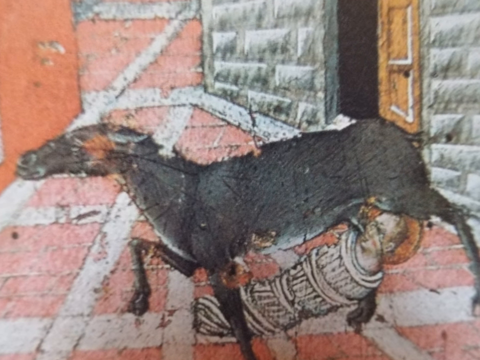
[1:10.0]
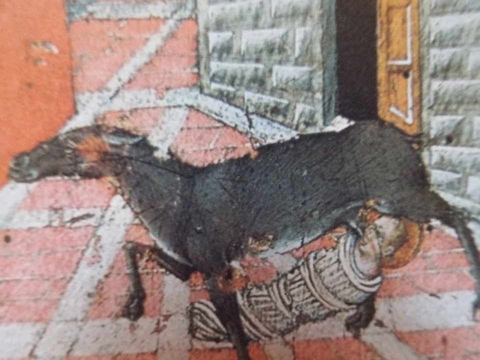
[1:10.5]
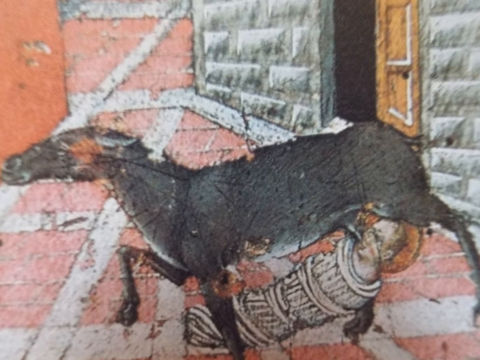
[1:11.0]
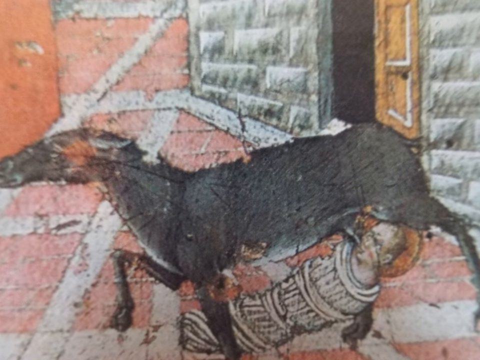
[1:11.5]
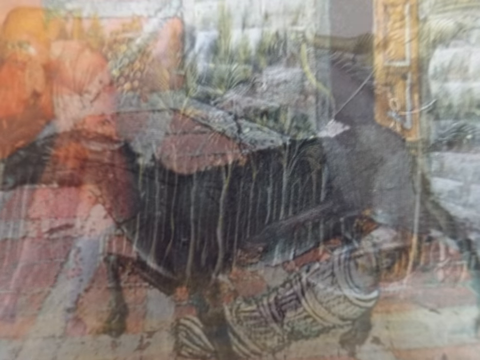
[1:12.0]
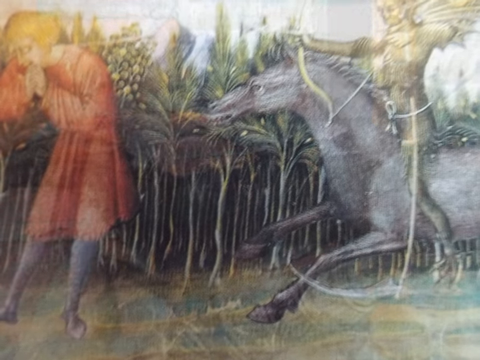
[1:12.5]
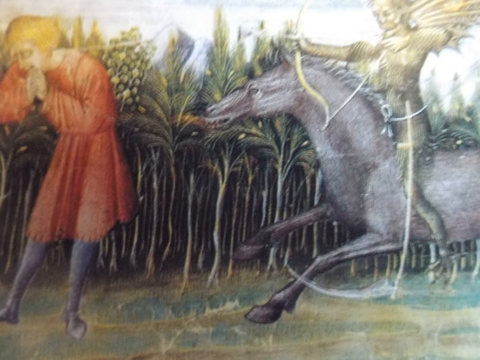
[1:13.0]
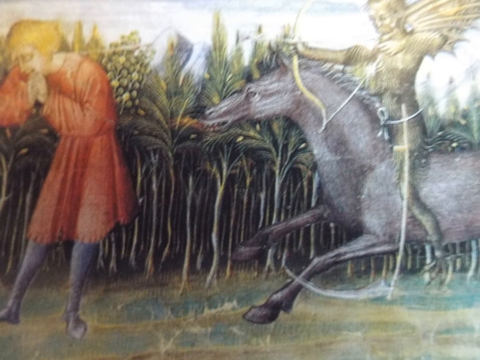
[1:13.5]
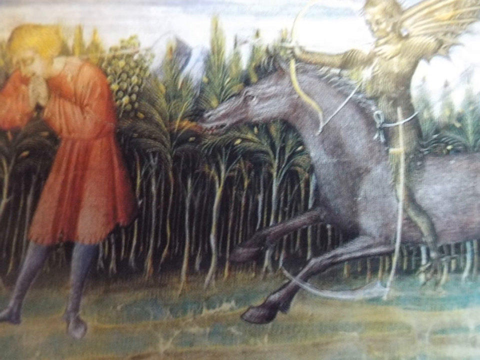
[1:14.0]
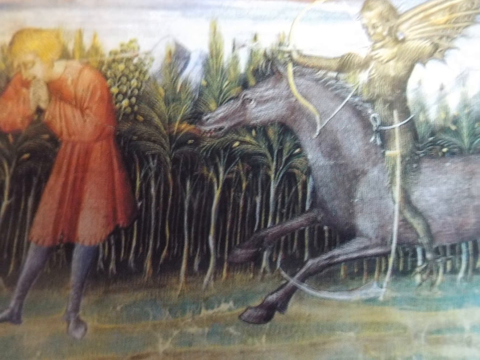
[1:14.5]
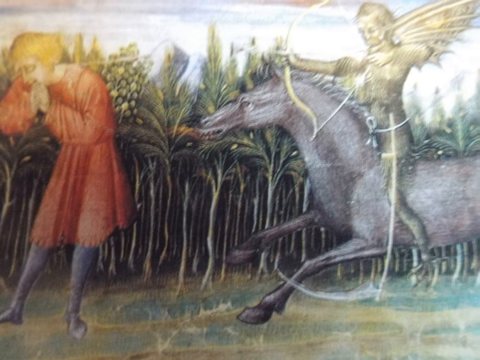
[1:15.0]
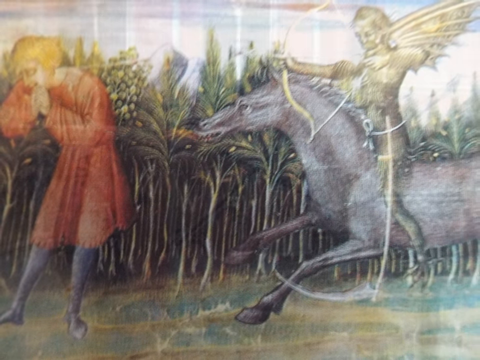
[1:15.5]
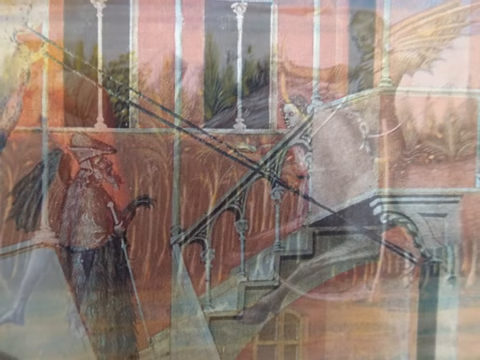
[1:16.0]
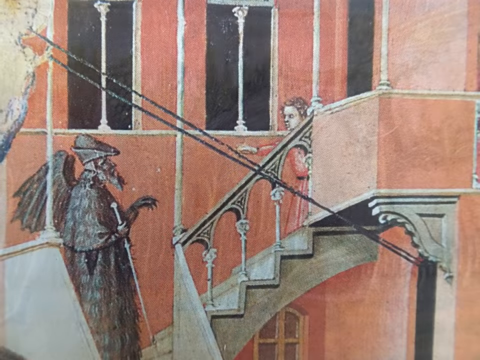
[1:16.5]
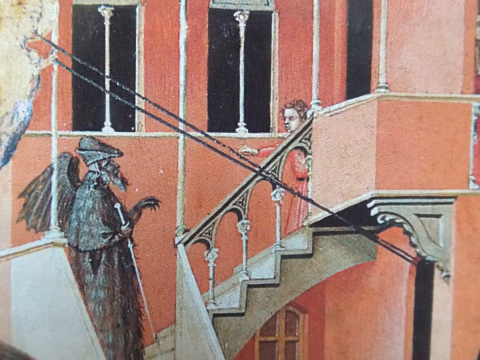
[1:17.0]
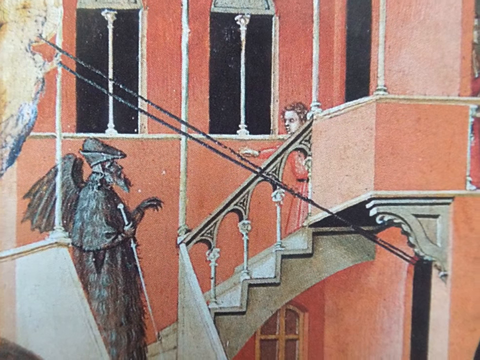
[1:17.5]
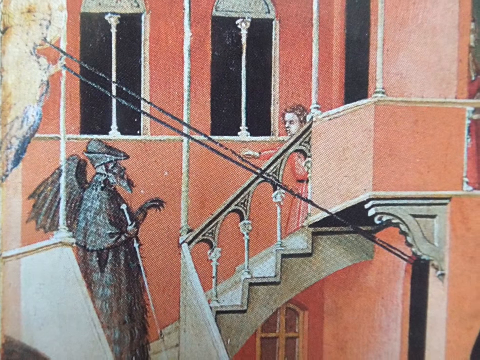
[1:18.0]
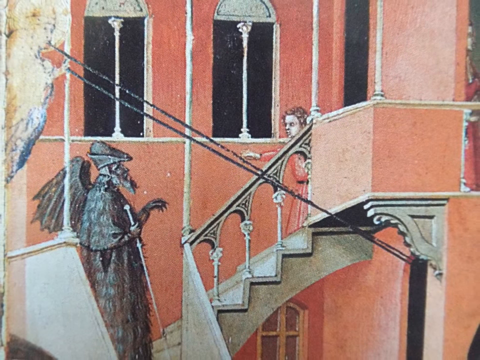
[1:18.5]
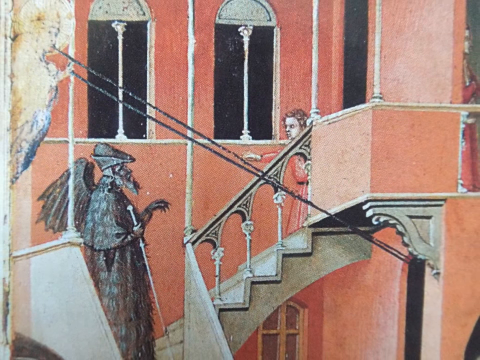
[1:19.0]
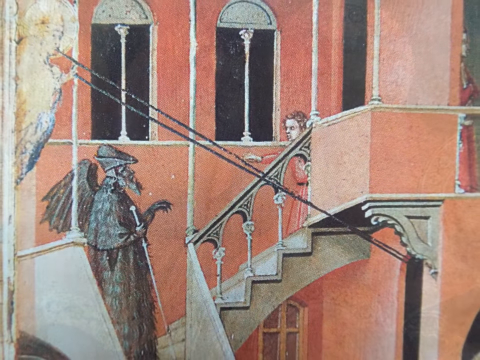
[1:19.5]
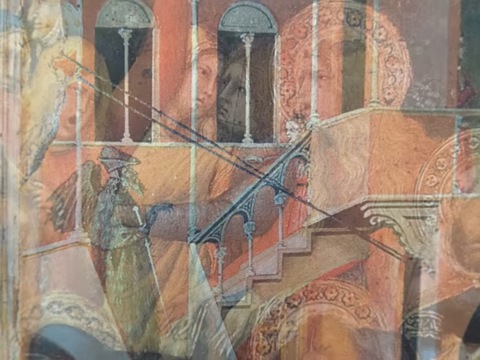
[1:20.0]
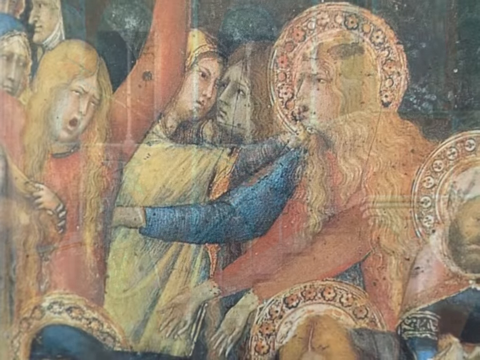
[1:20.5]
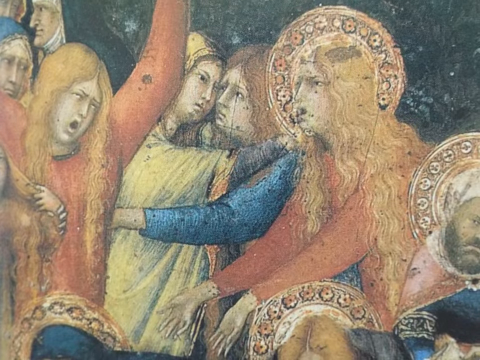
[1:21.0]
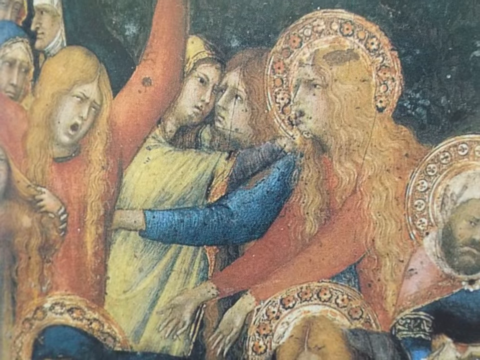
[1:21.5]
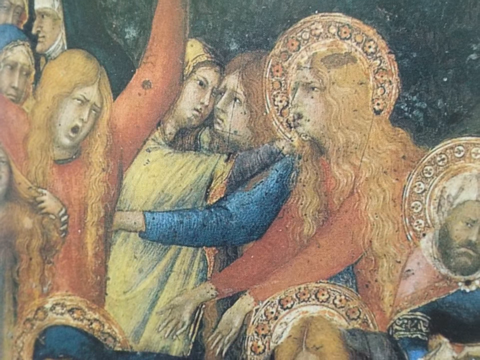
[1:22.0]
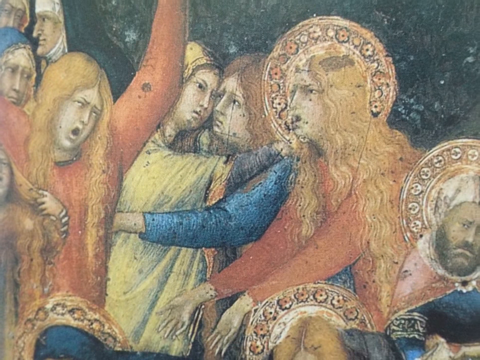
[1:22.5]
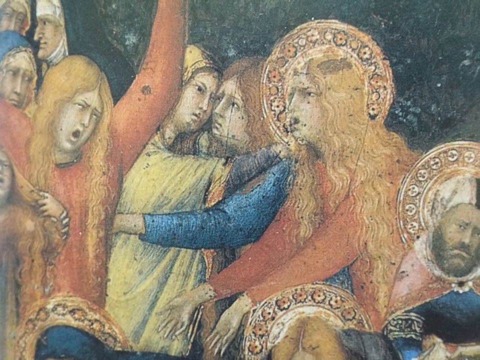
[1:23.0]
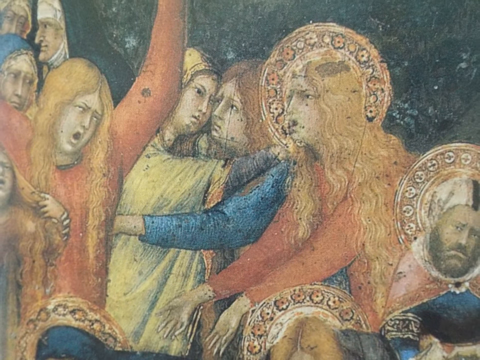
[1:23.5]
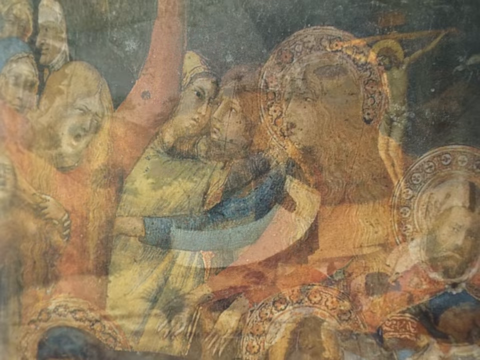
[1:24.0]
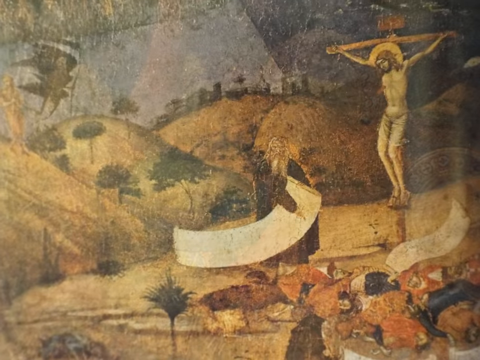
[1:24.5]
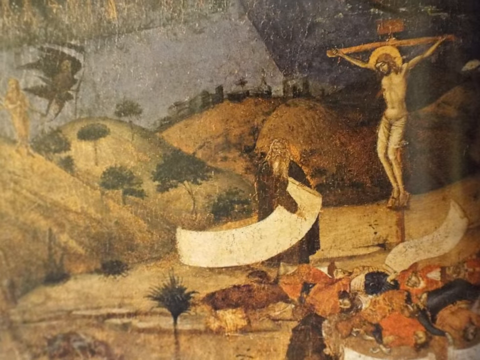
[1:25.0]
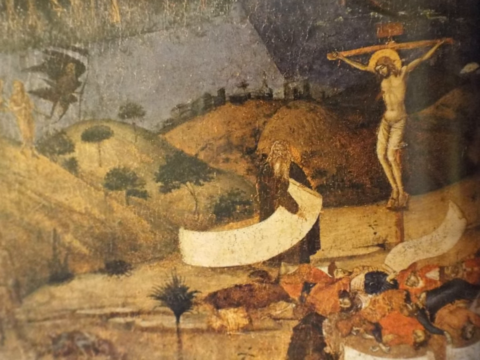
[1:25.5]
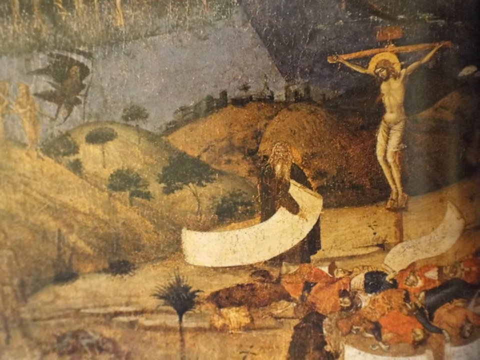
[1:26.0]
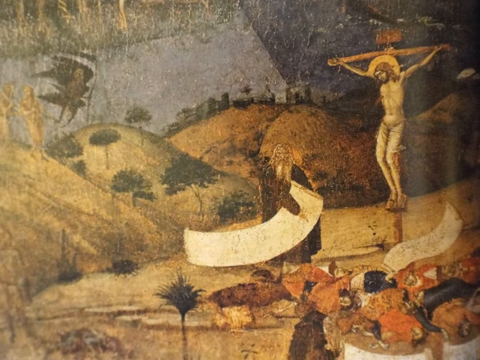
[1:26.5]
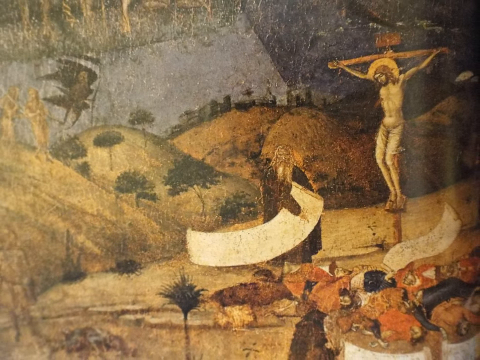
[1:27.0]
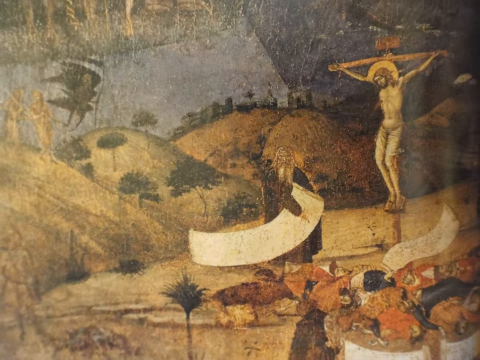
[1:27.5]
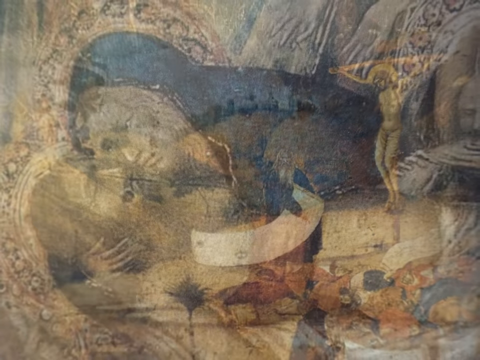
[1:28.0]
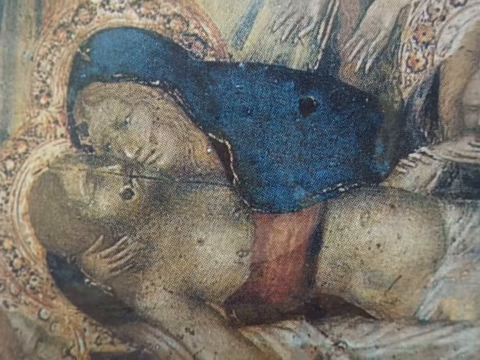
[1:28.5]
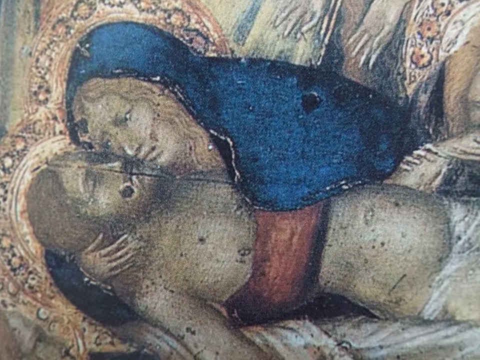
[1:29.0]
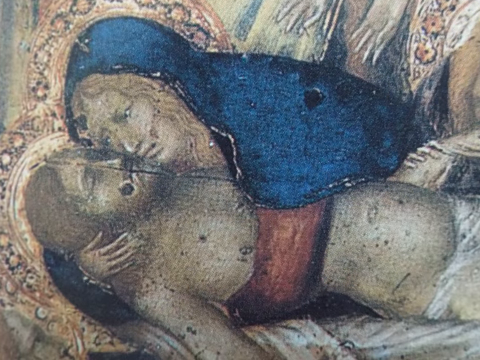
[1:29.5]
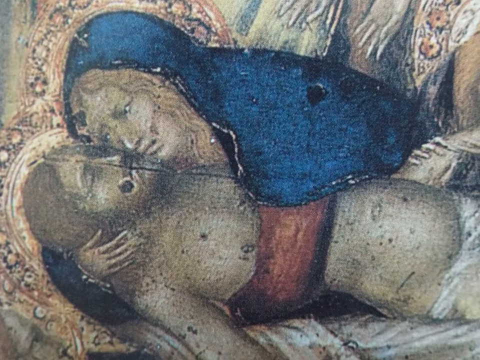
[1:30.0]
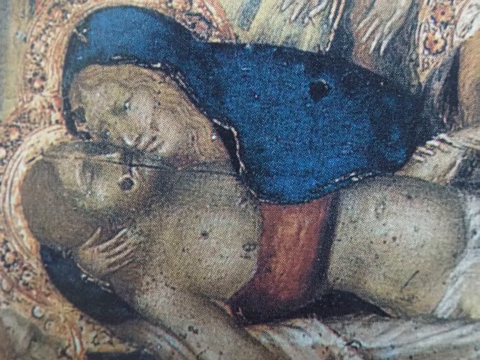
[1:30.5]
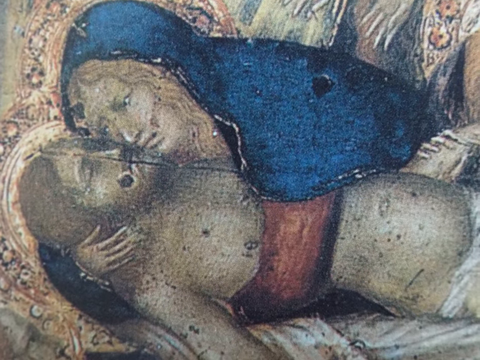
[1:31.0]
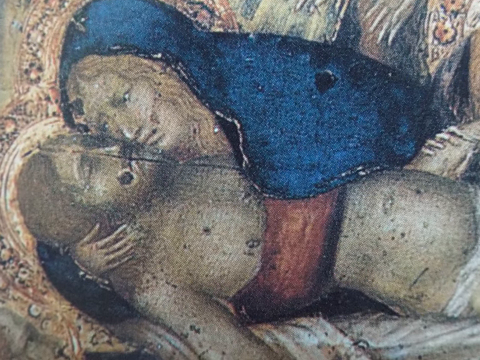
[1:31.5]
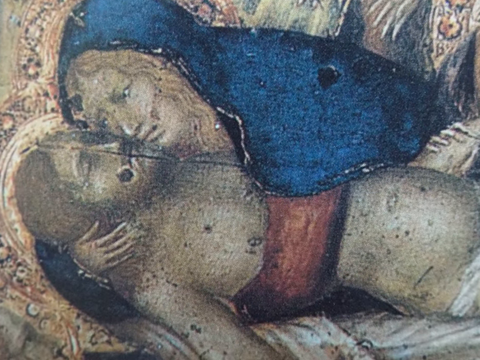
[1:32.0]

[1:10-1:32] A close-in view shows that they are right outside a white house with its door open. Next is something like a garden or a field with very small trees. A spiritual being like an angel, with interesting gold wings, rides a gray horse and points an arrow at a figure whose gender is unclear. The figure wears a red dress and blue stockings, has short blonde hair, hands clasped and eyes closed in prayer, and is as tall as the plants. Then there is a red building with white trim or columns. An angel holds a very long object like a shofar. A man cloaked in black, with small all-black wings and a dagger or some type of pointed stick in his hand, talks to the person on the stairs. Next is a photo of a woman with long blonde hair dressed in red, and another in a yellow gown hugging another person. Other people have halos with a floral pattern behind them, and a nun is in the background. A picture shows Jesus hanging on the cross with a halo behind him. A man stands with an open scroll in the middle, with a field in the distance. A picture shows a woman with a blue head covering hugging a man laying down with something red draped over him; it looks like it could be Jesus because he is naked.